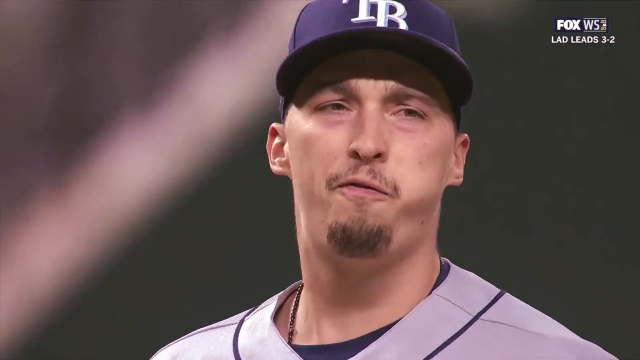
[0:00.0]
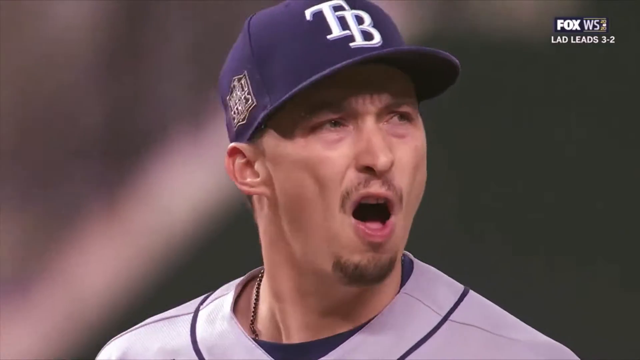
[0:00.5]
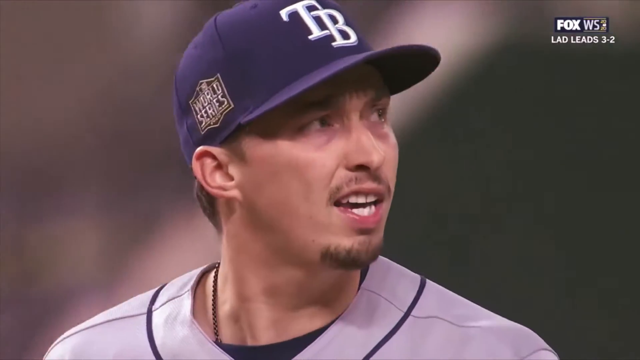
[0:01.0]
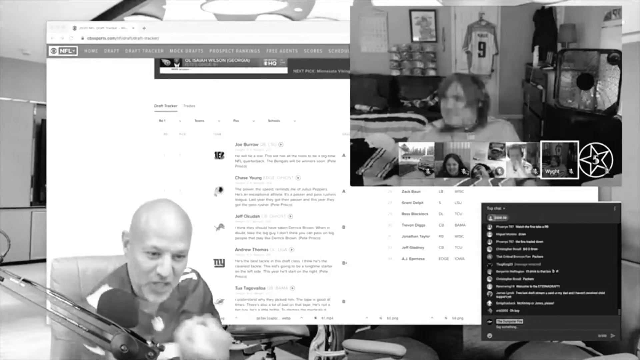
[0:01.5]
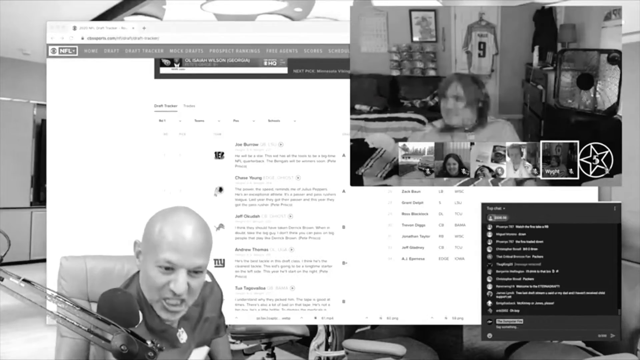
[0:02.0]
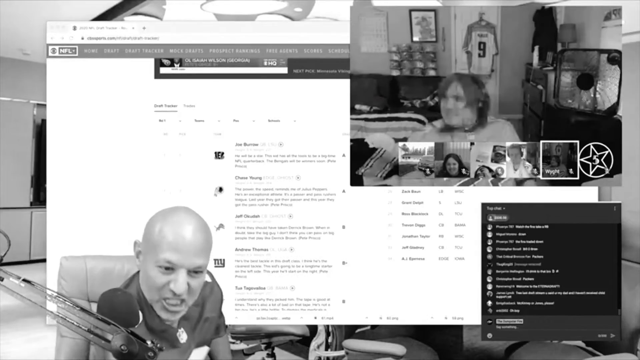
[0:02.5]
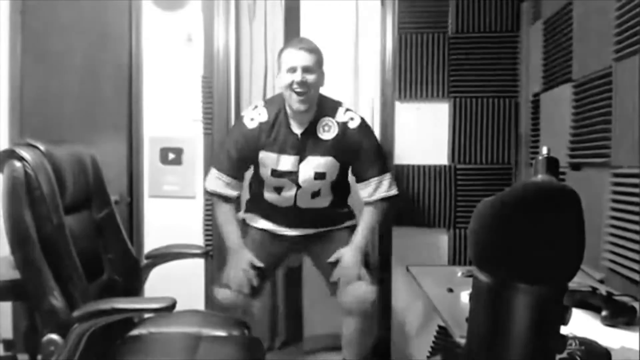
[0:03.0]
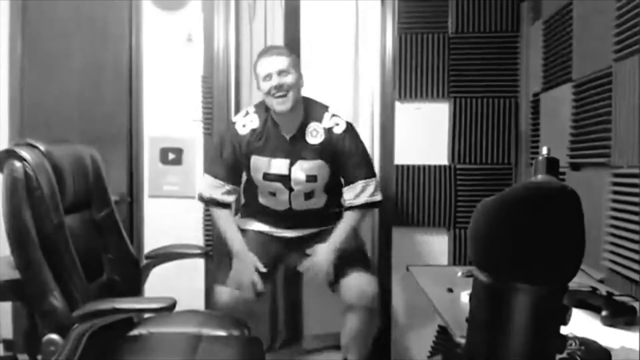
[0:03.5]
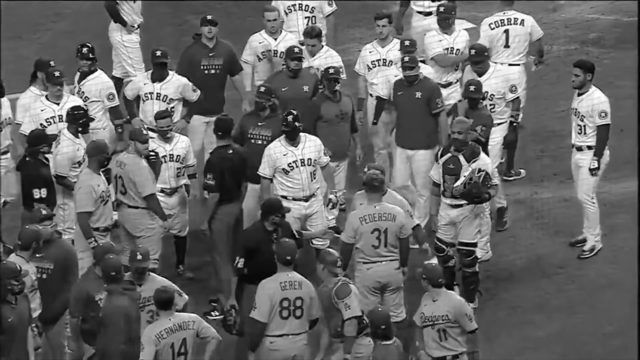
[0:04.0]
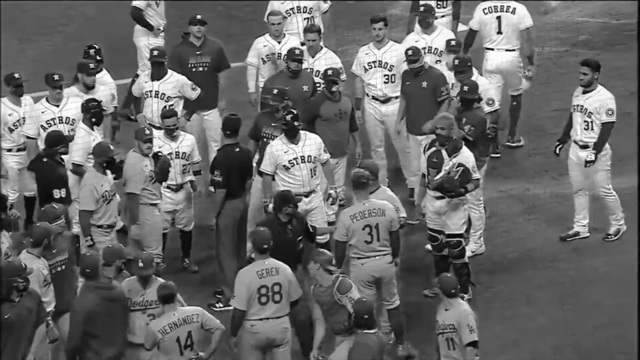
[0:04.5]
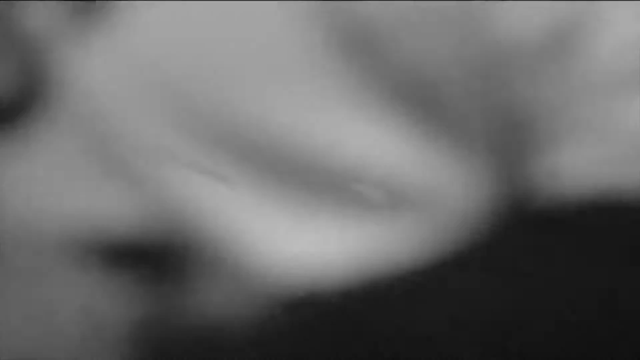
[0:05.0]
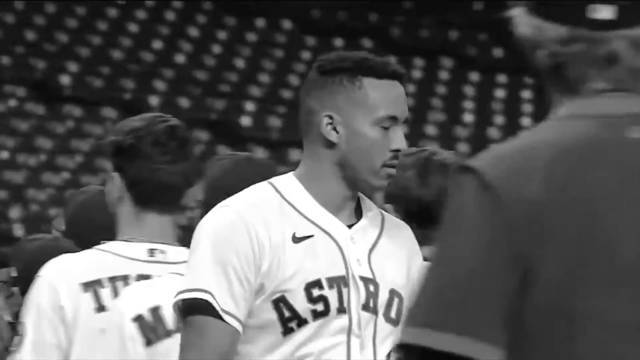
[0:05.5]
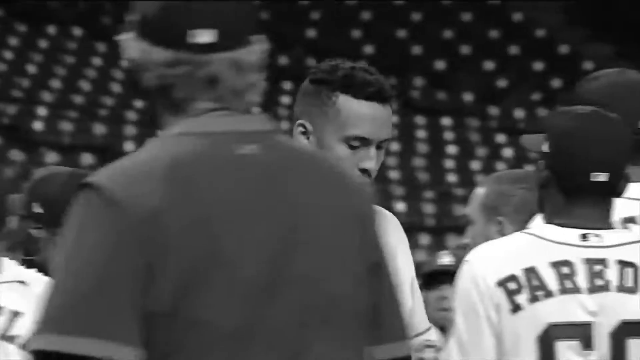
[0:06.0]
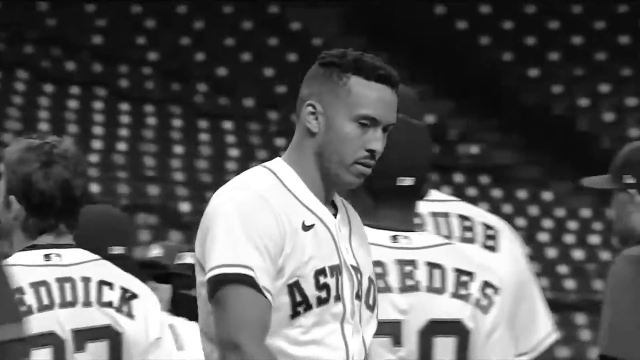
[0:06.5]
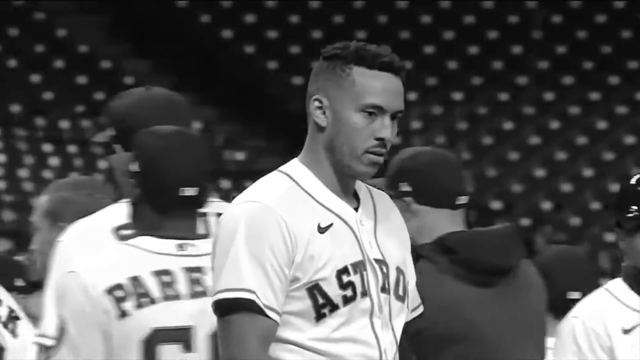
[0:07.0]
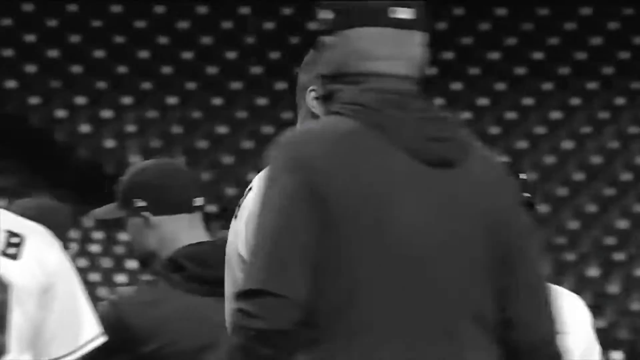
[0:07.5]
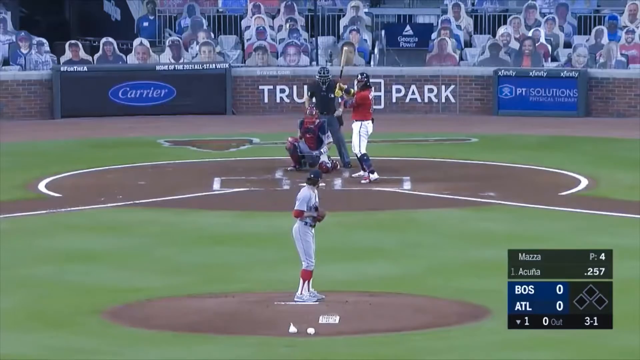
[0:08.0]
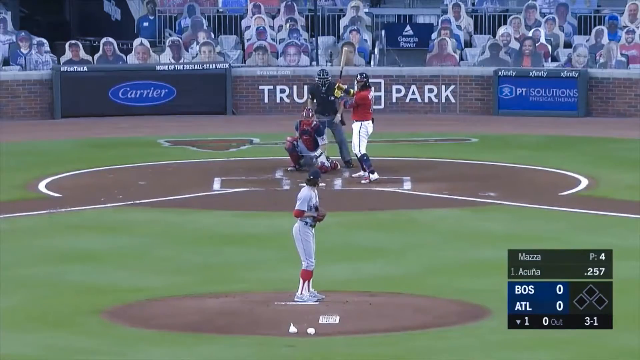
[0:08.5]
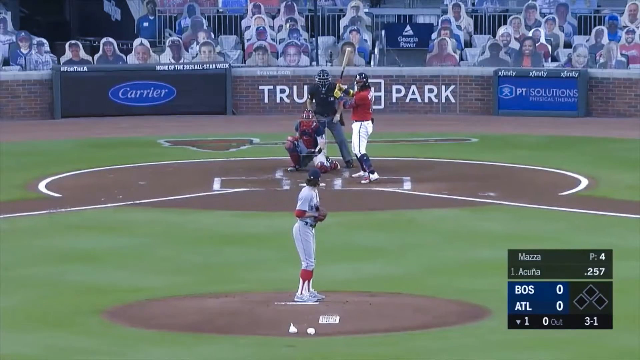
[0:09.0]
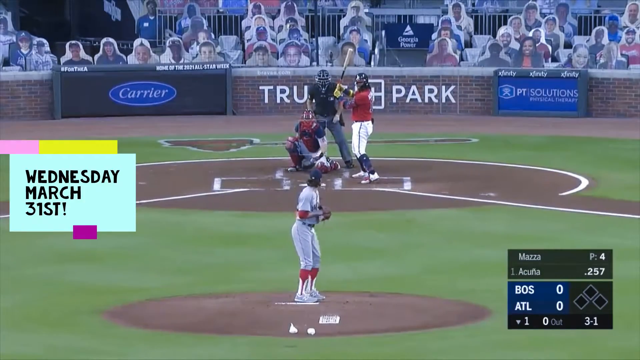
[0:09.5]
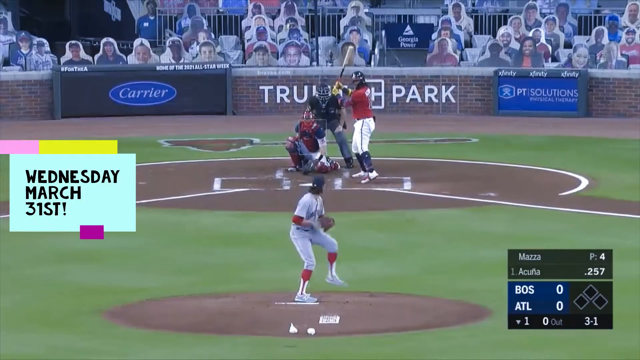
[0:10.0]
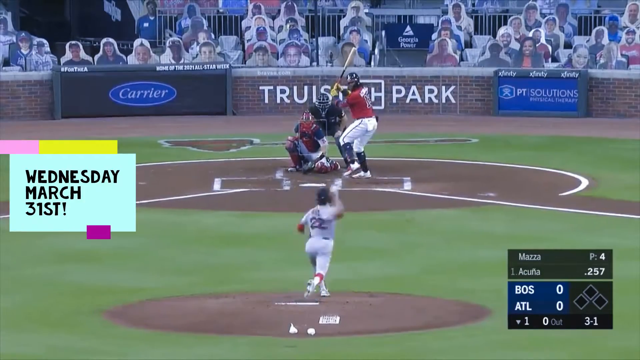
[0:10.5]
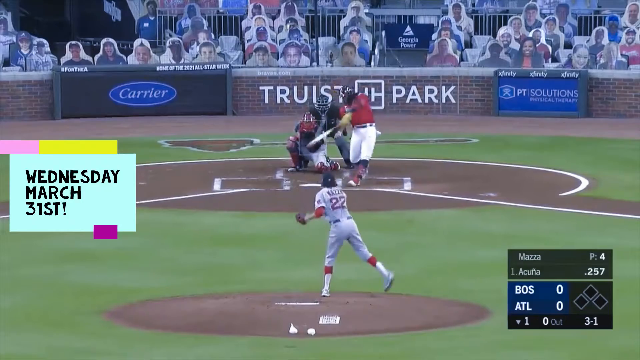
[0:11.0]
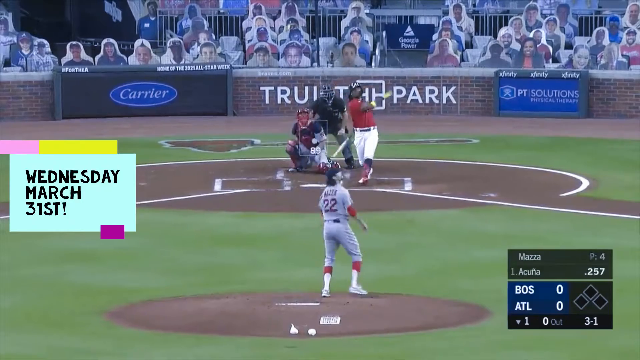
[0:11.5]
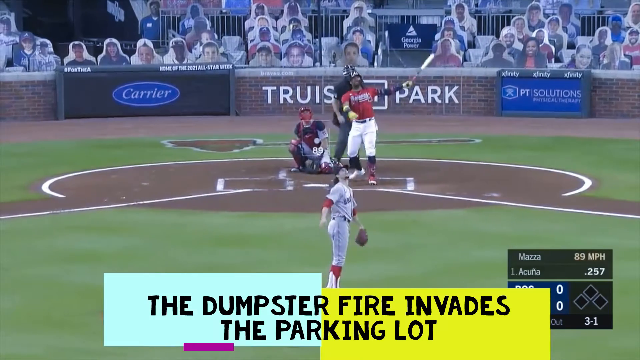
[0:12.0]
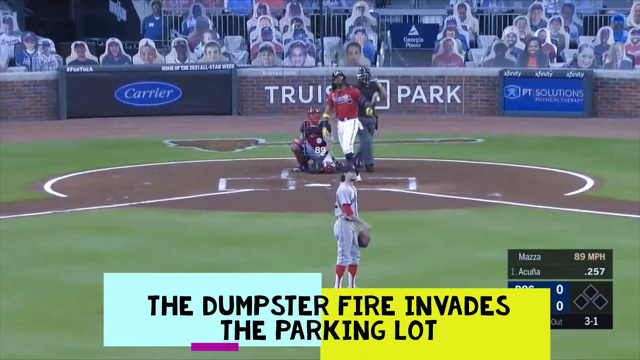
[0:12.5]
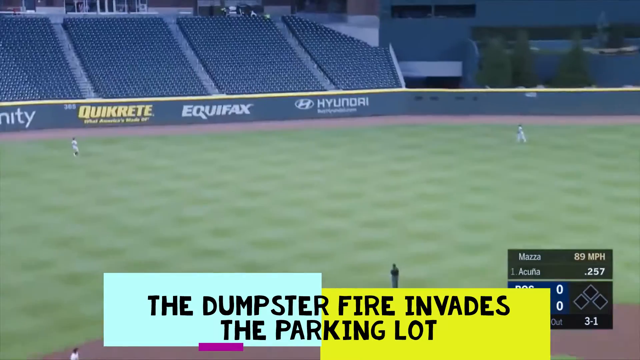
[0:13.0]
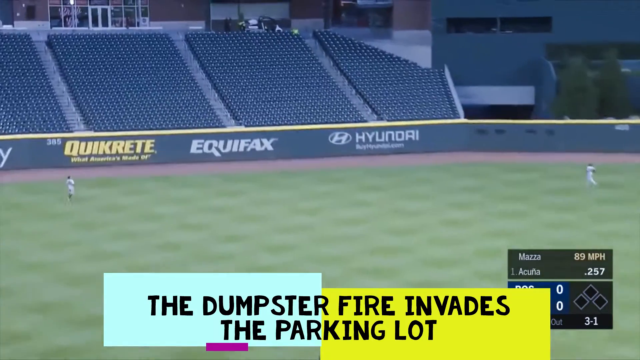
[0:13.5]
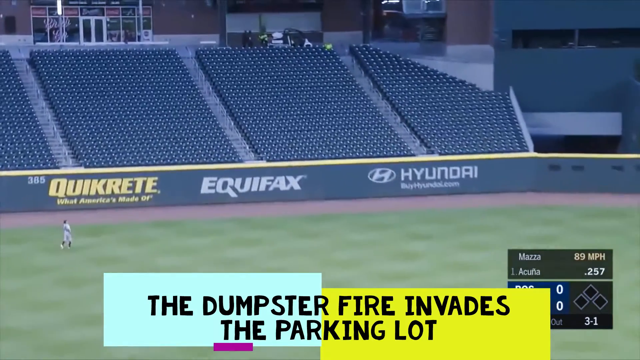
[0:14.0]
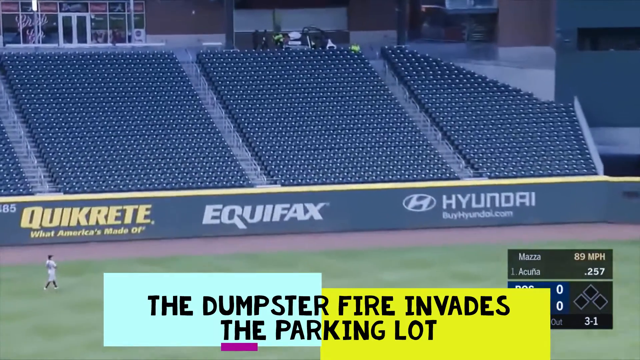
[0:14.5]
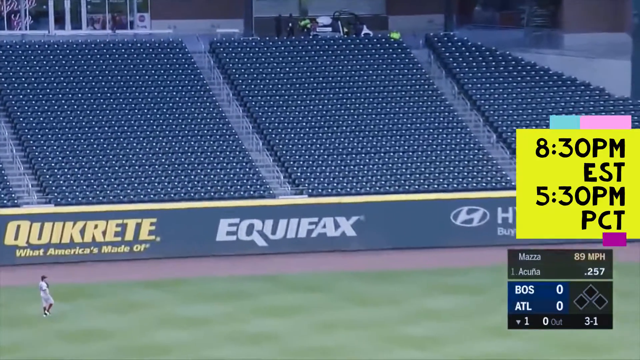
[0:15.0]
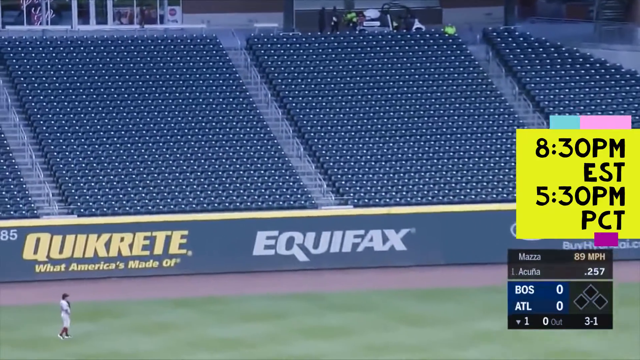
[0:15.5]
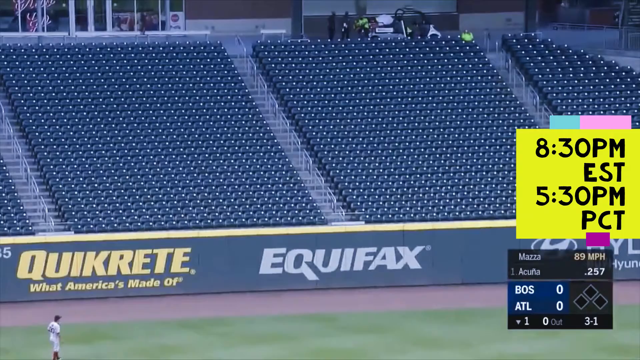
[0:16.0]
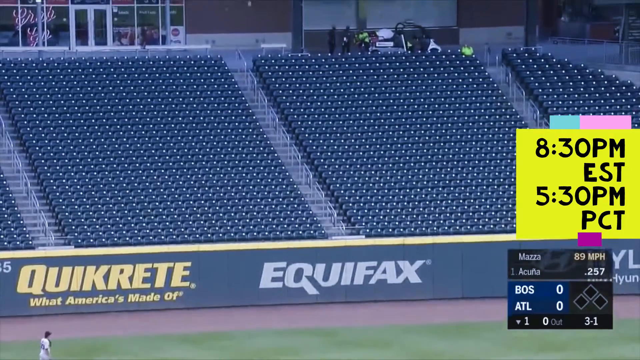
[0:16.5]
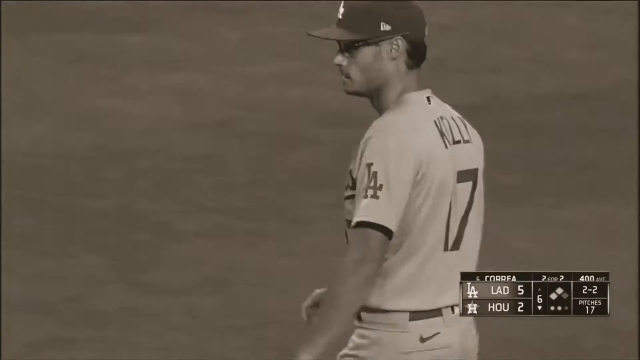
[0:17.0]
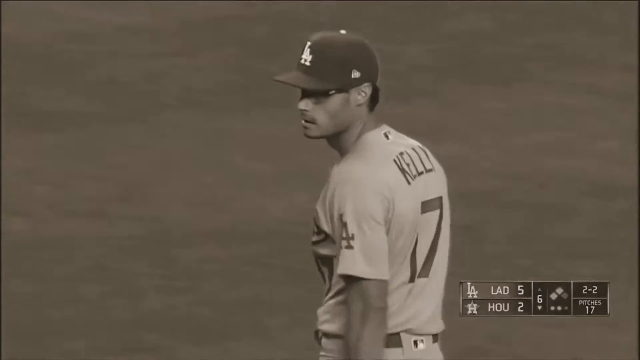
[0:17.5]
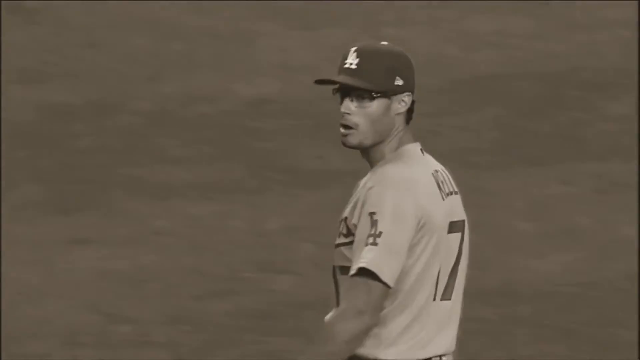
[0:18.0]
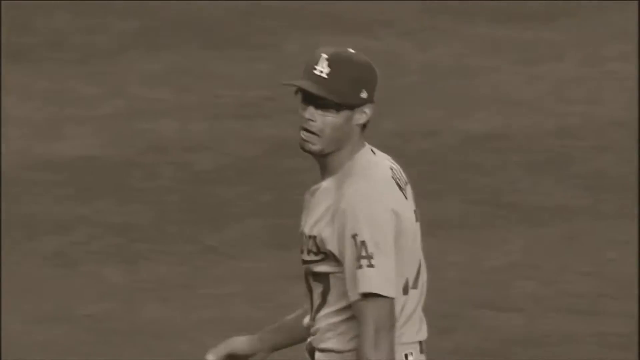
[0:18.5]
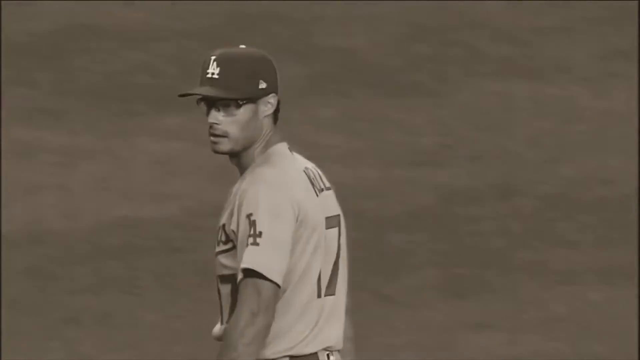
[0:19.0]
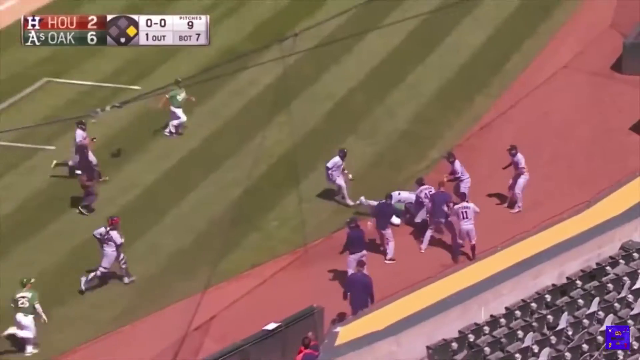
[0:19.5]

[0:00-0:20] People are playing baseball, and some of them are fighting. Players wear blue and white jerseys with the Nike emblem. The score is 0-0. A man is shown dancing. There are no people in the stands watching; instead there are cardboard boards that look like people watching the game. One player has the name "Kaylee" written on him, and he wears glasses. Charts are also shown that look like news charts, in black and white.